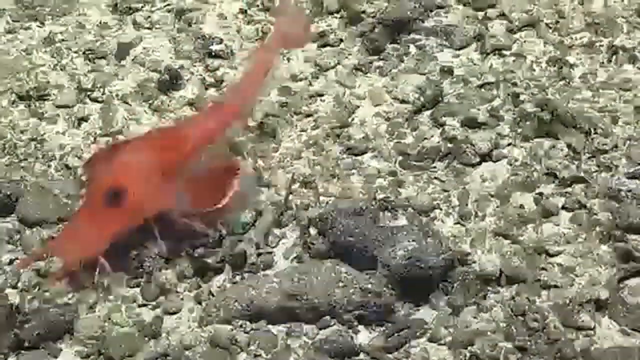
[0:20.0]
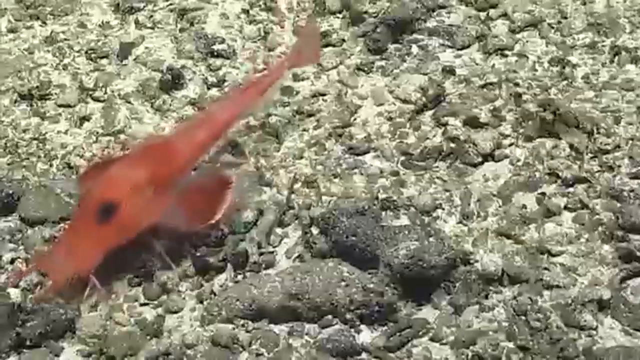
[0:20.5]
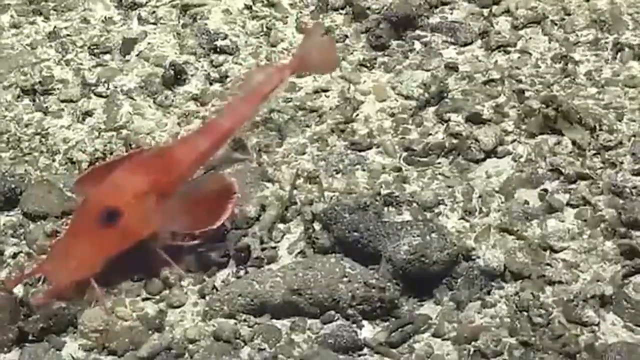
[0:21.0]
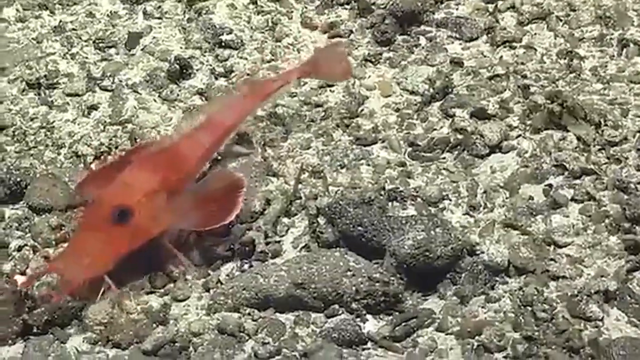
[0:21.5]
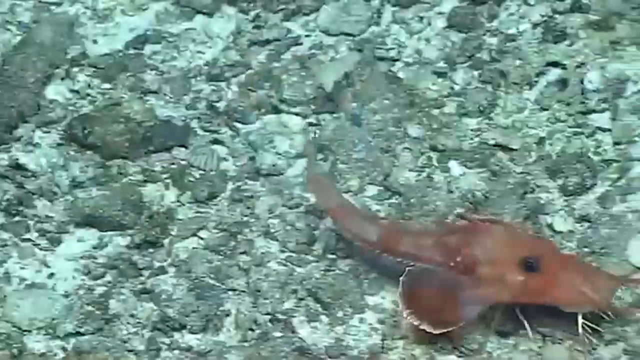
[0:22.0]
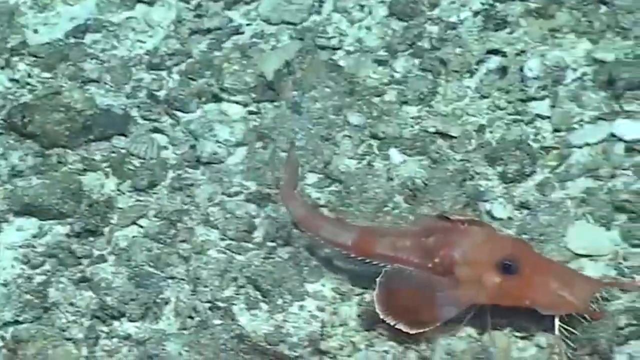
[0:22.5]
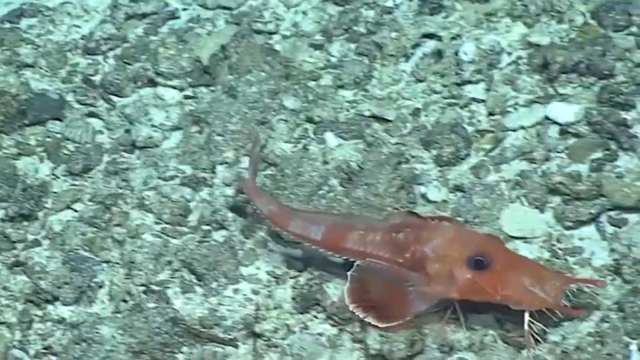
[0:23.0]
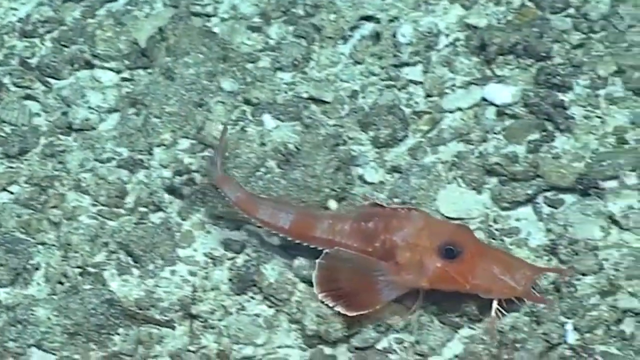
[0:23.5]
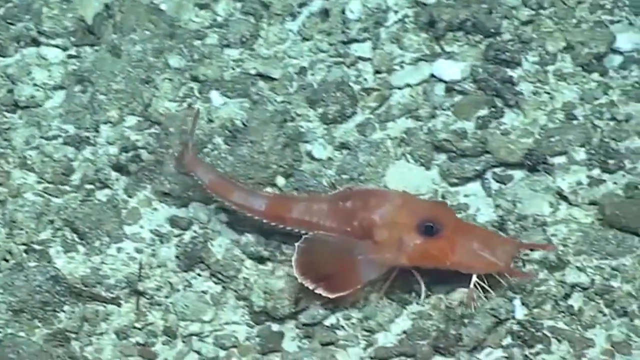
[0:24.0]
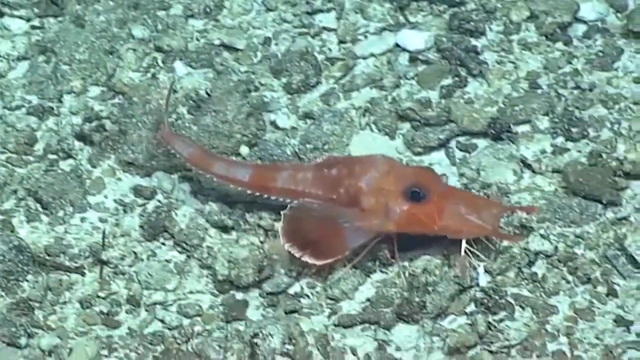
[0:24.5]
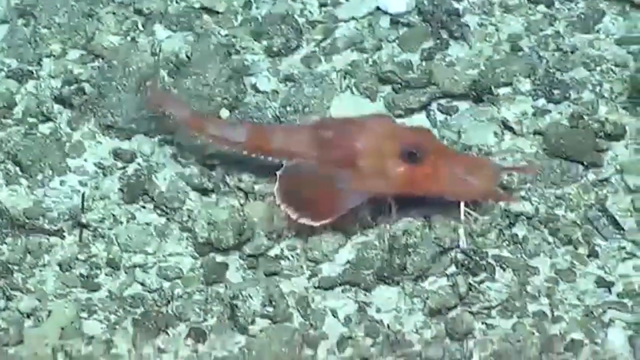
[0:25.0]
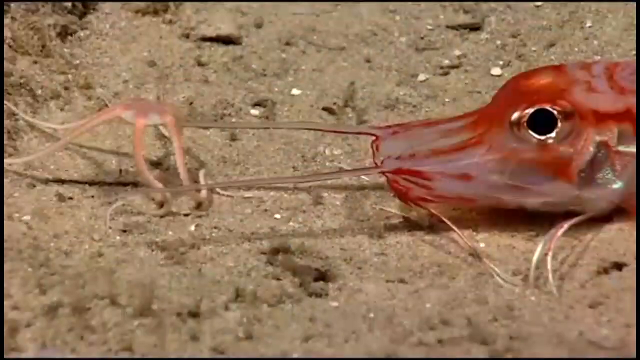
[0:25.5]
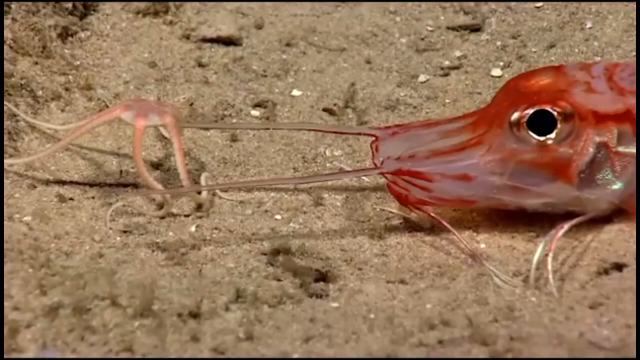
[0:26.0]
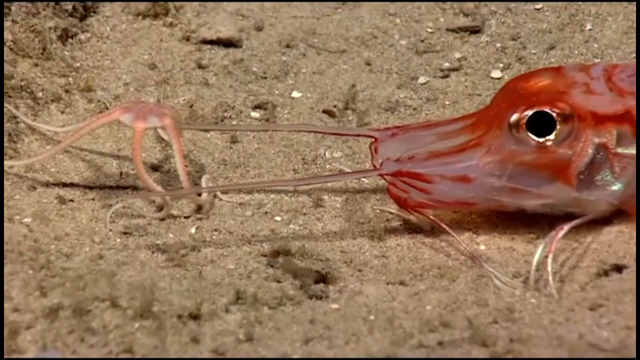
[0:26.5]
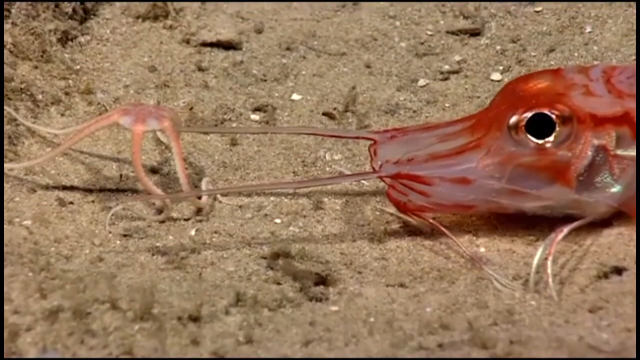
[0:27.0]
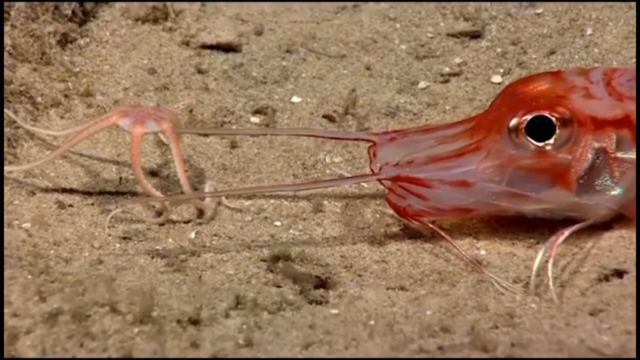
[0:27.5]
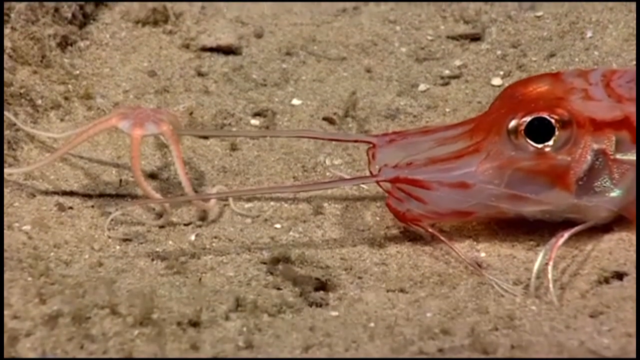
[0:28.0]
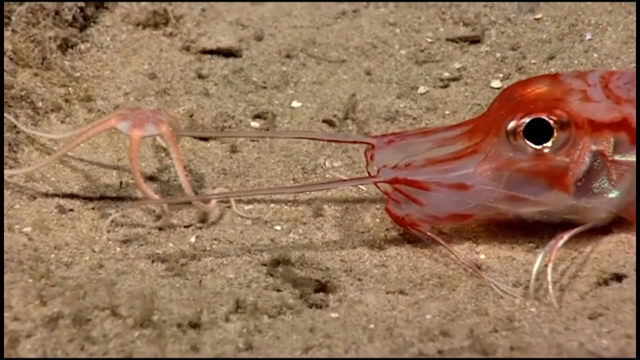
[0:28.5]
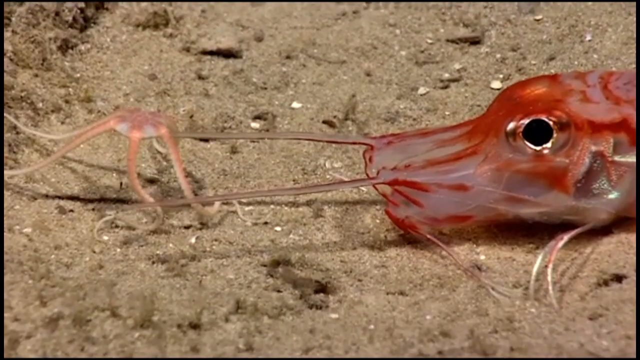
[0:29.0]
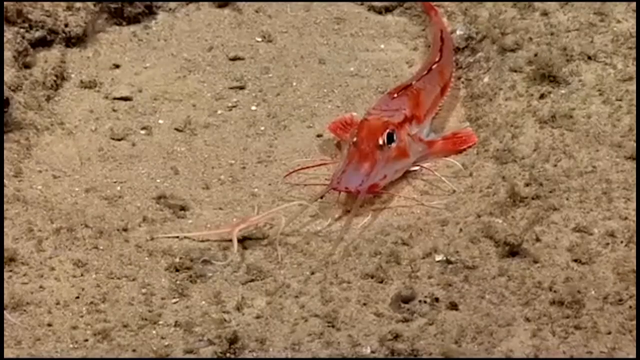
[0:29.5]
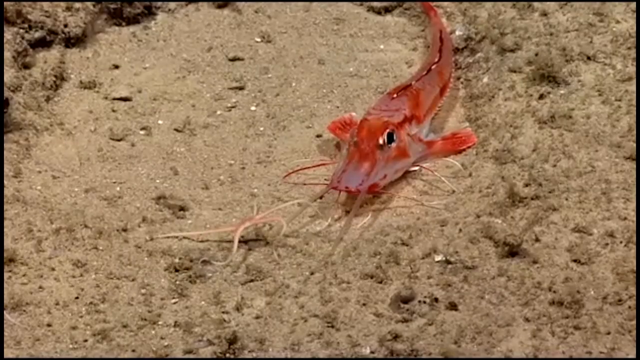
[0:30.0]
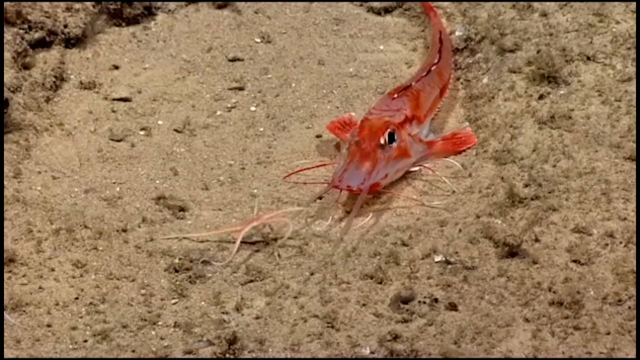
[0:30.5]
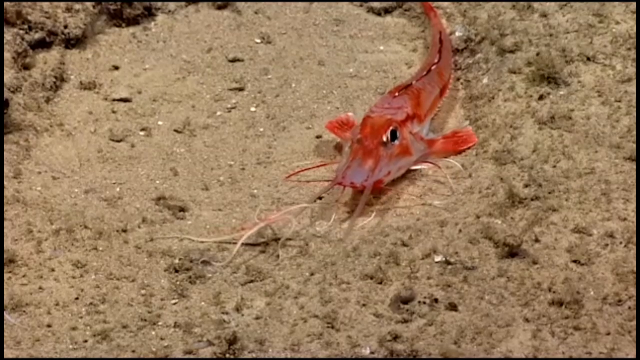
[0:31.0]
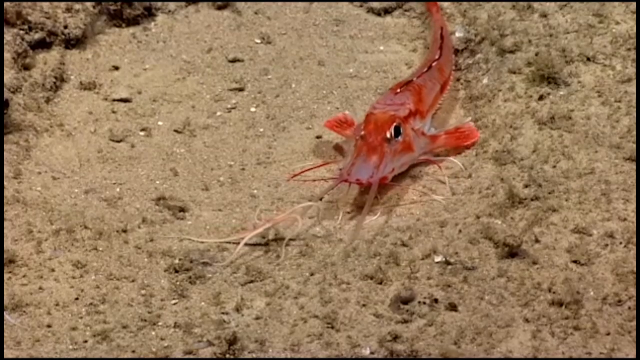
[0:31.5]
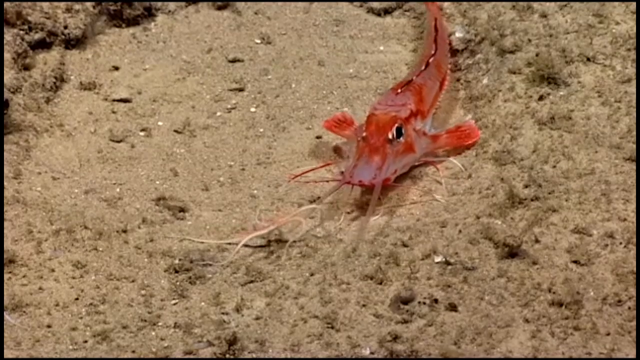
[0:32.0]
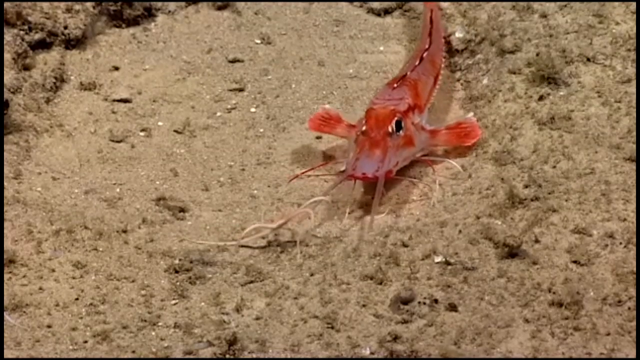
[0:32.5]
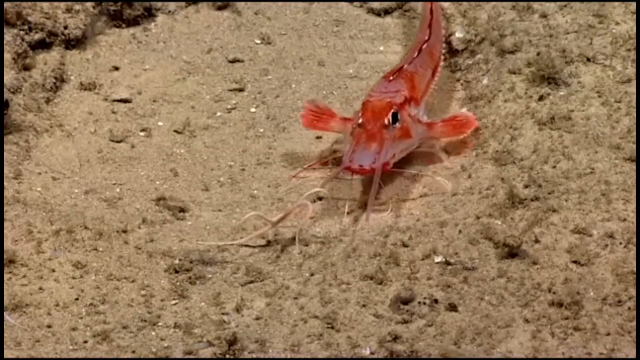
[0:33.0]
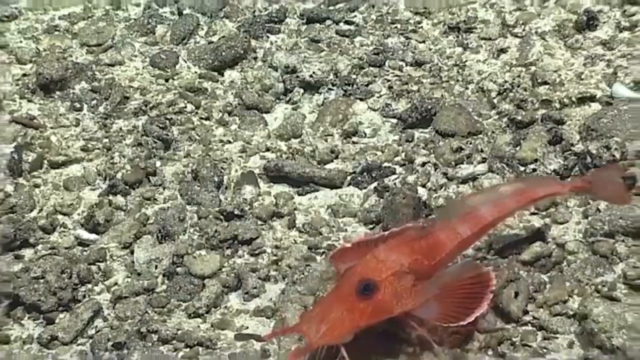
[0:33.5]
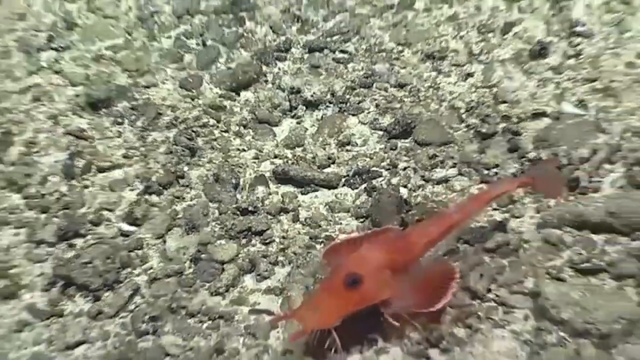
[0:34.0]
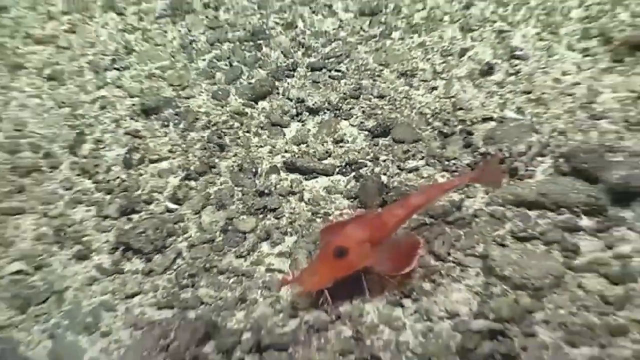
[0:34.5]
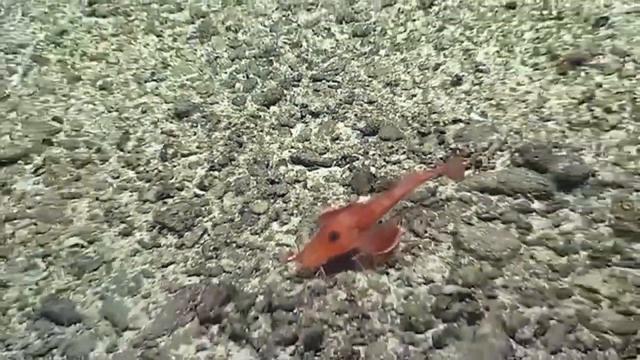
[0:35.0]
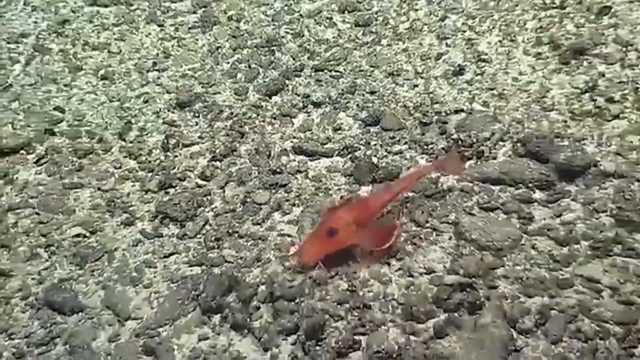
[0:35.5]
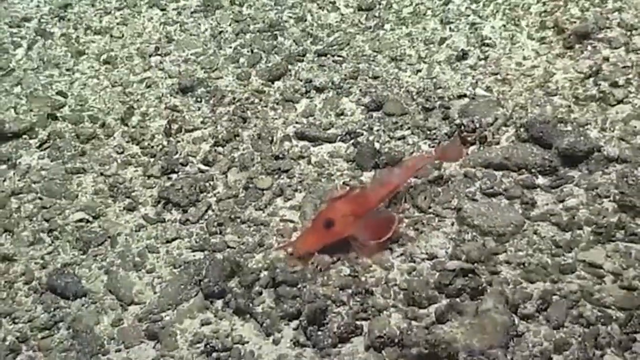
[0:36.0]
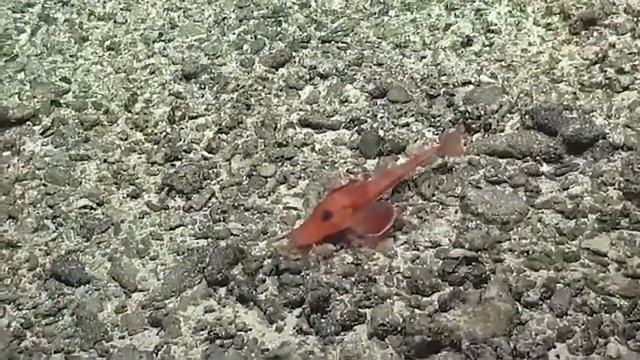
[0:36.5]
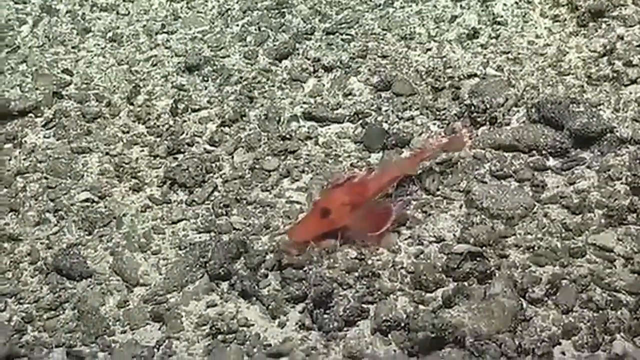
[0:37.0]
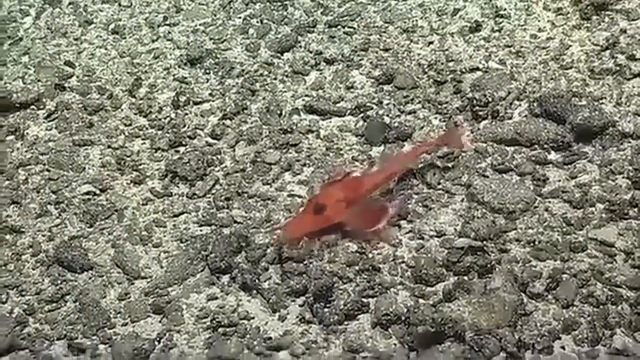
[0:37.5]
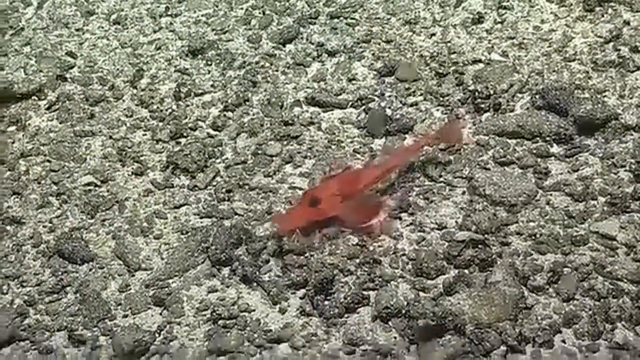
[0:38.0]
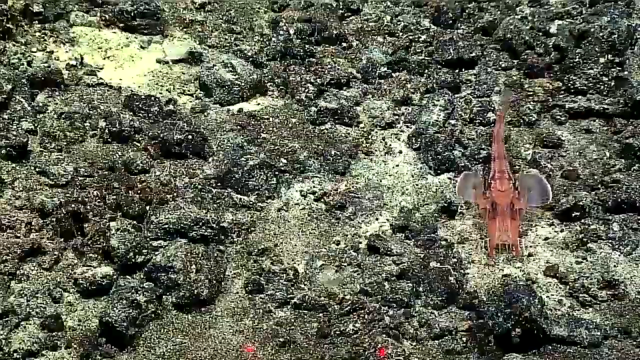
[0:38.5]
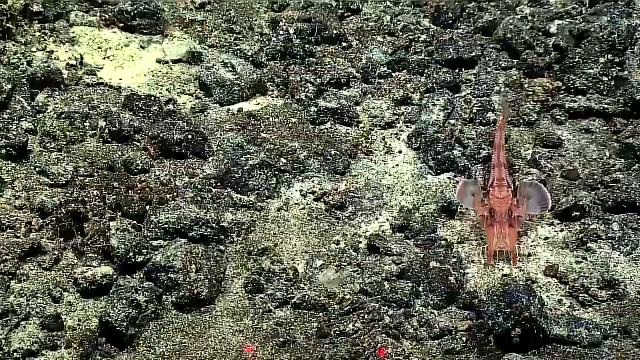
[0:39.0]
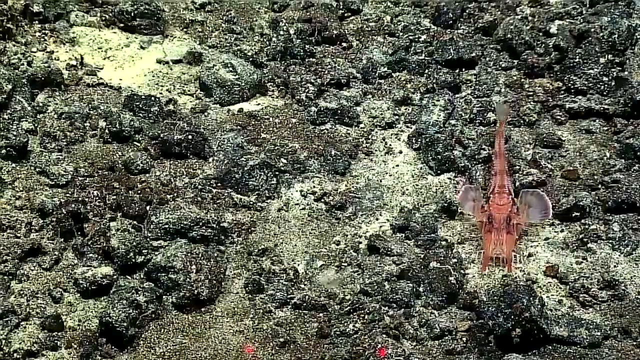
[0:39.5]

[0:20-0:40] The fish moves its tail, and the video transitions to different footage with the same rocky underwater background but a bluish tint over the entire image. The fish is shown once again, swimming along the bottom of the screen with its mouth facing the right side of the screen. Round fins are visible along the side of its body just behind its head, and a long, bony, spiny tail moves from side to side as the fish swims through the water. The video then transitions to a zoomed-in view of just the fish's thin, spiny mouth, which is clear in nature, and zooms in on its black eye. This time the fish faces the left side of the screen, with its head on the right side, cut off by the right border. The very long, thin, spiny mouth extends across the full width of the screen. This zoomed-in view shows the fish against a sandy background, then zooms out to show its entire body, with the bottom of the fish and its mouth in the center of the screen, facing approximately downwards. The fish floats out slightly, the camera zooms out, and the video transitions back to a green-tinted view of the fish against the rocky floor, swimming in the center of the frame.